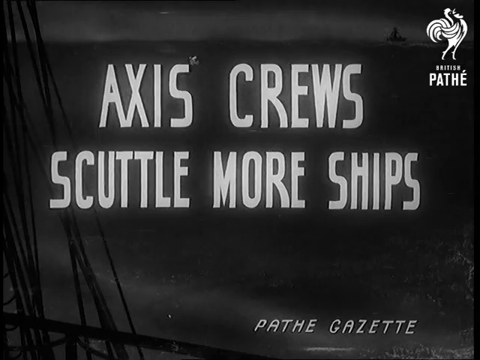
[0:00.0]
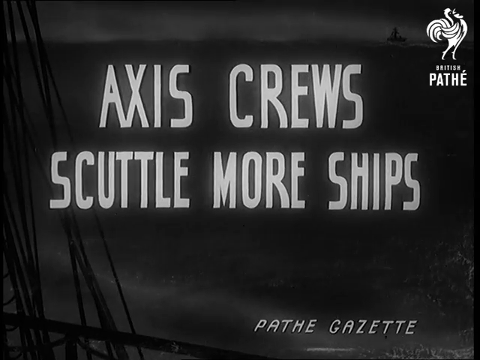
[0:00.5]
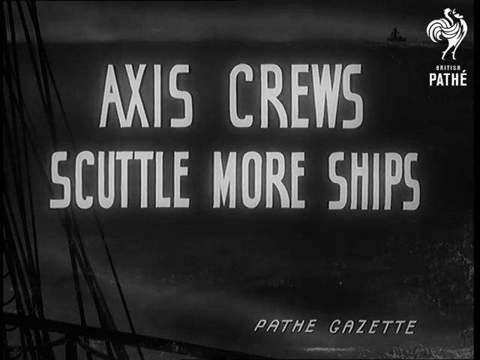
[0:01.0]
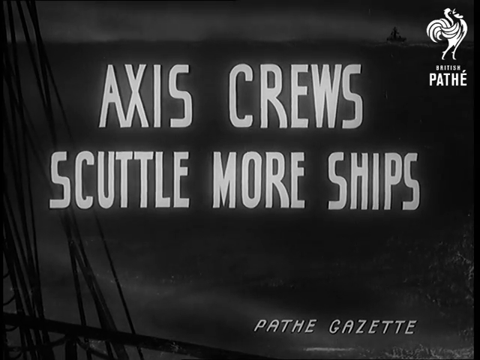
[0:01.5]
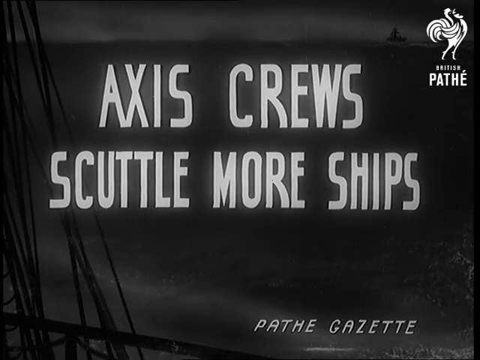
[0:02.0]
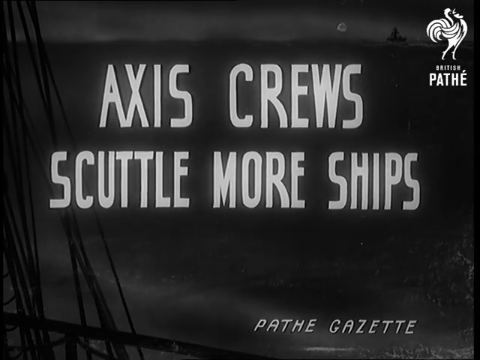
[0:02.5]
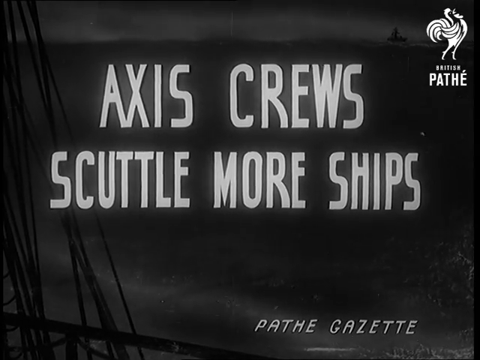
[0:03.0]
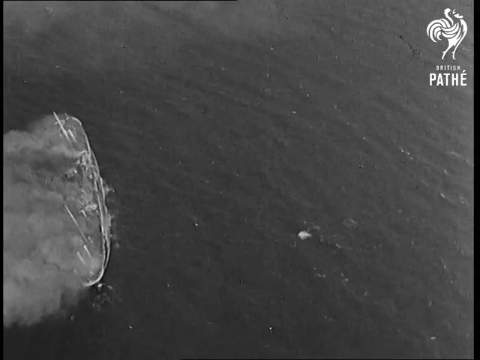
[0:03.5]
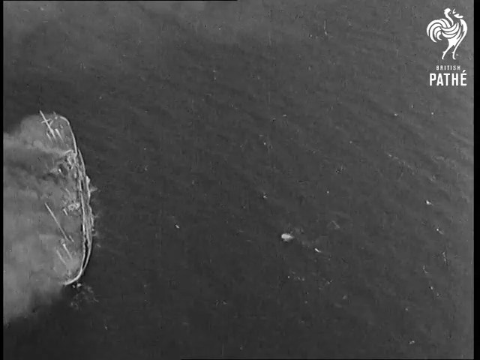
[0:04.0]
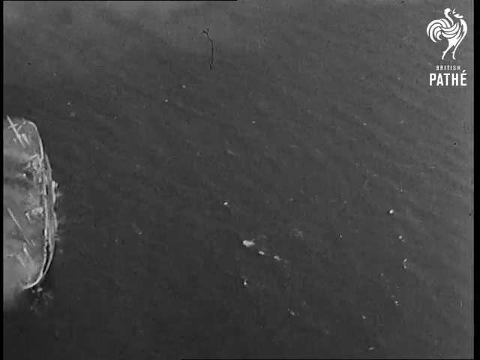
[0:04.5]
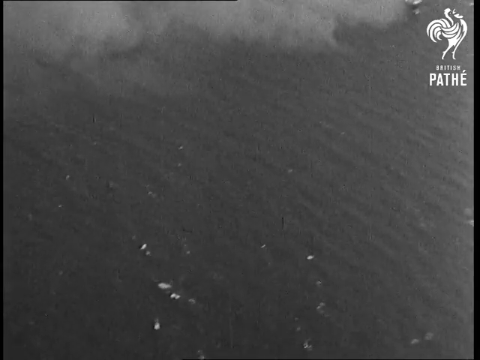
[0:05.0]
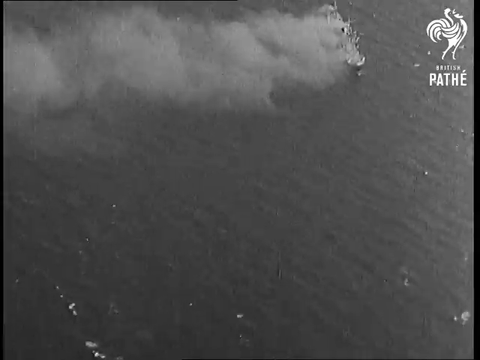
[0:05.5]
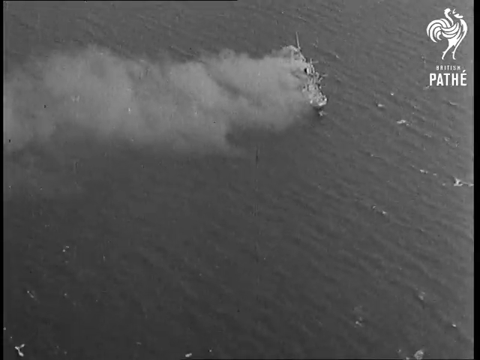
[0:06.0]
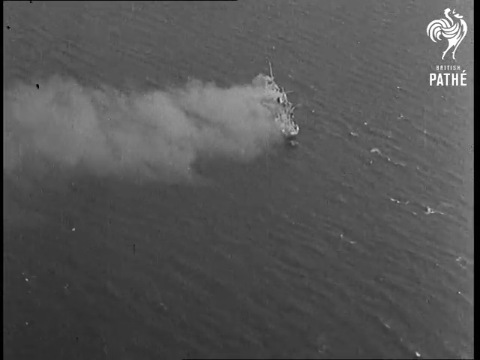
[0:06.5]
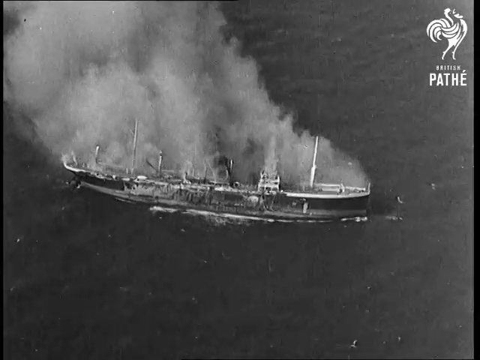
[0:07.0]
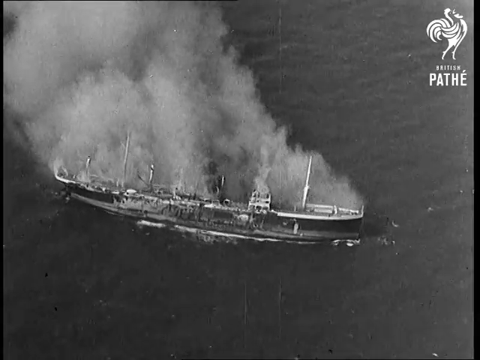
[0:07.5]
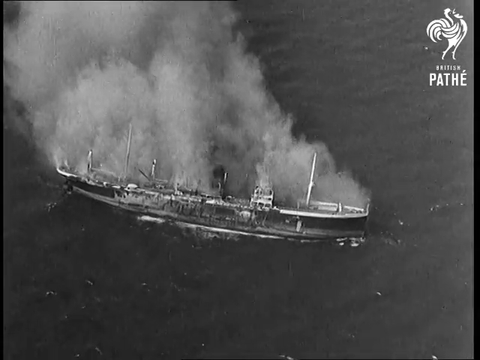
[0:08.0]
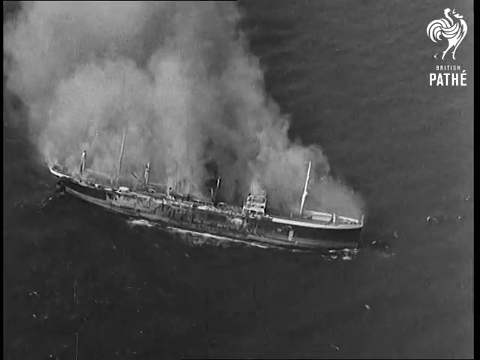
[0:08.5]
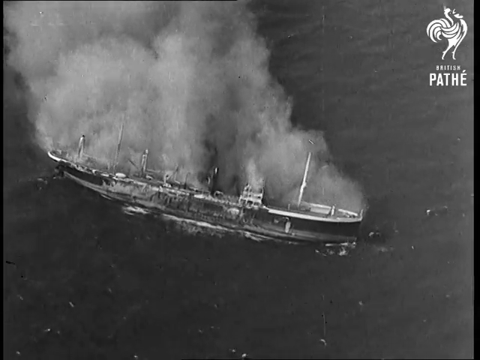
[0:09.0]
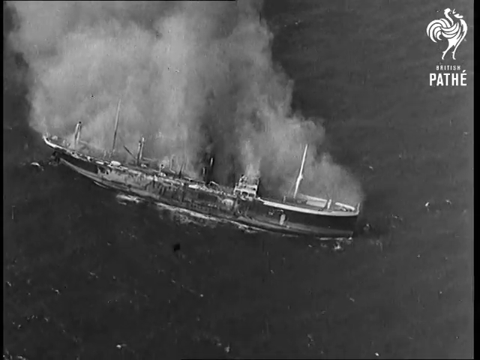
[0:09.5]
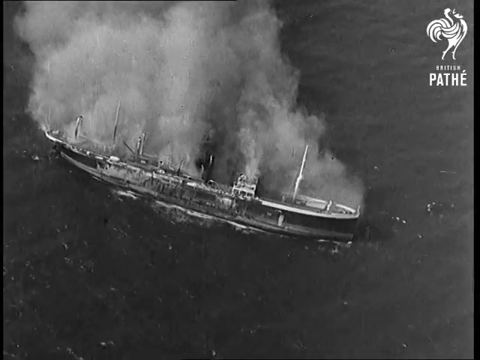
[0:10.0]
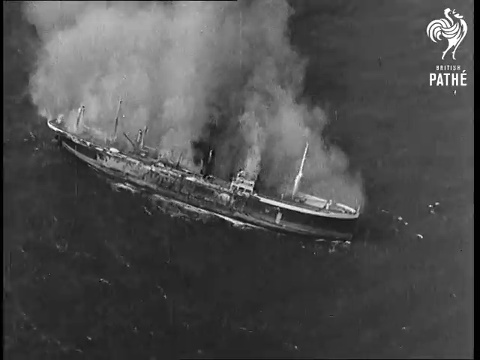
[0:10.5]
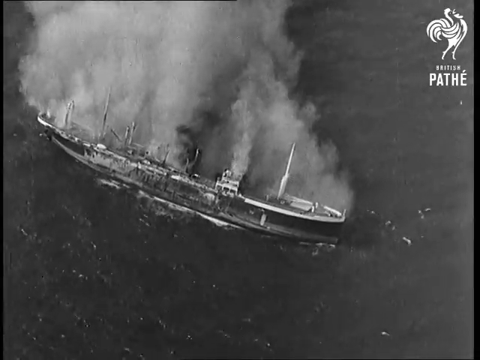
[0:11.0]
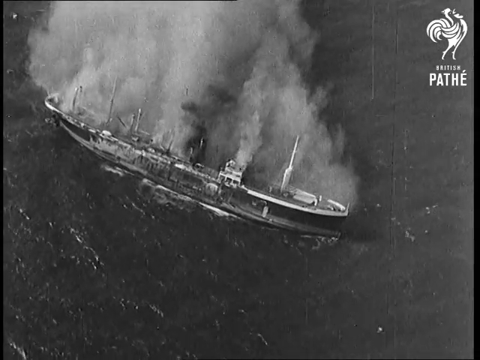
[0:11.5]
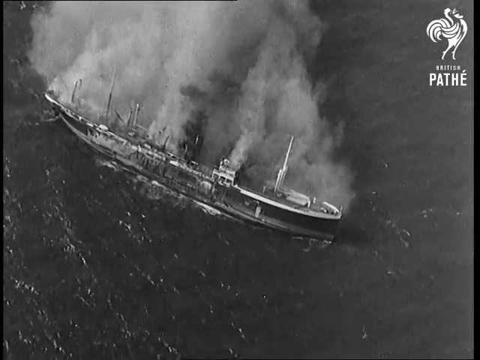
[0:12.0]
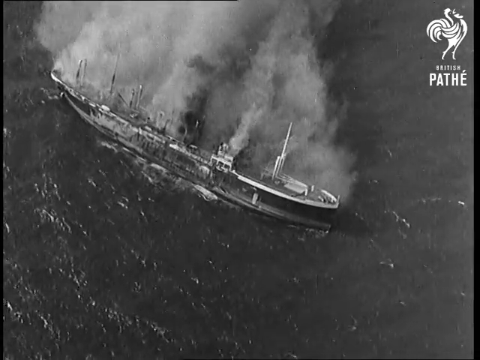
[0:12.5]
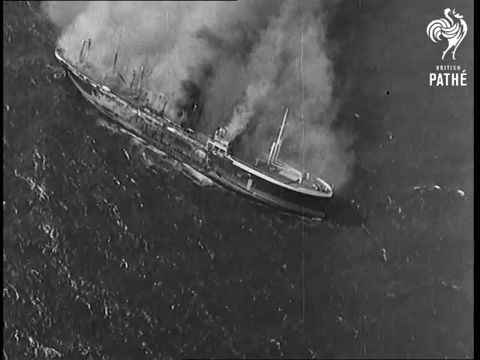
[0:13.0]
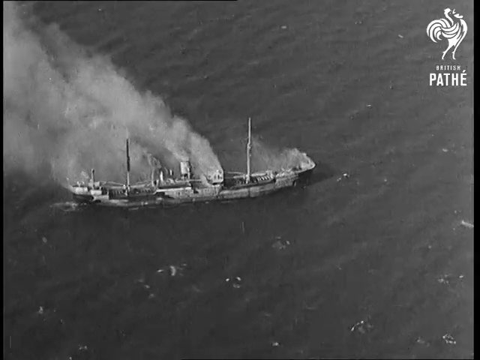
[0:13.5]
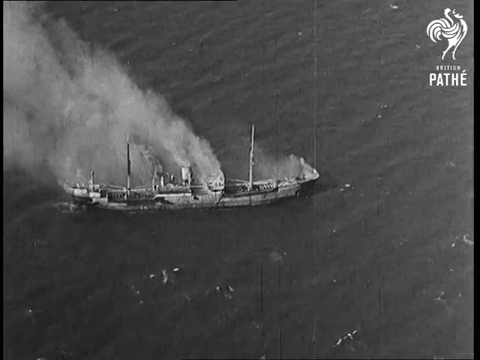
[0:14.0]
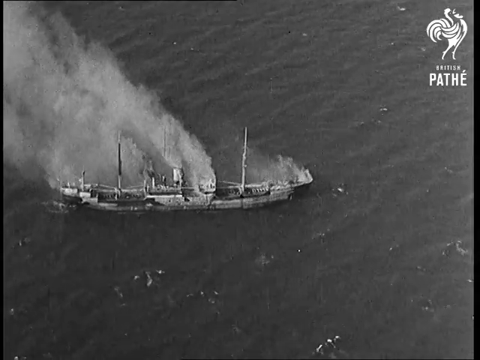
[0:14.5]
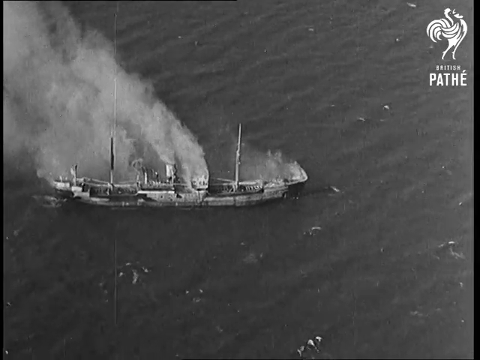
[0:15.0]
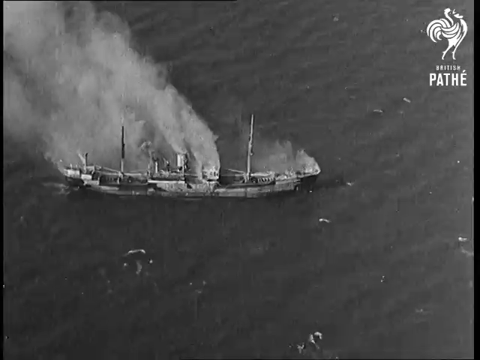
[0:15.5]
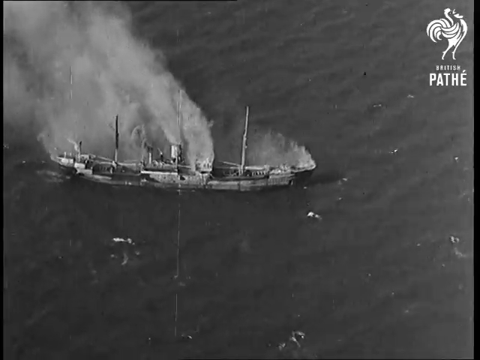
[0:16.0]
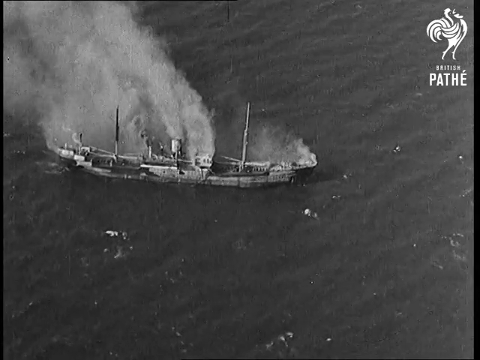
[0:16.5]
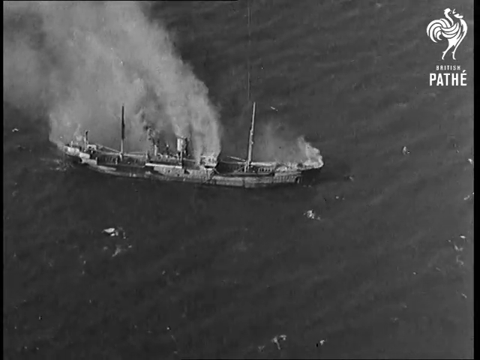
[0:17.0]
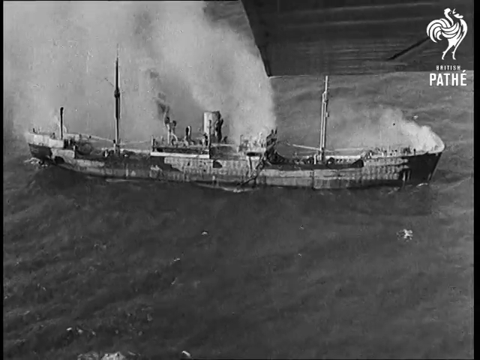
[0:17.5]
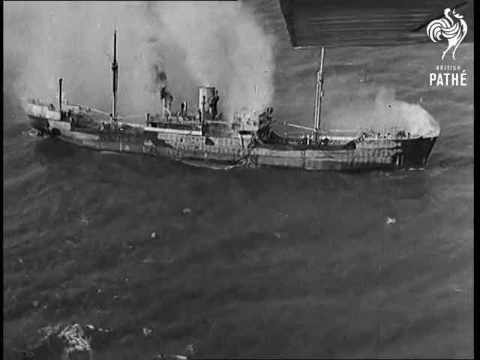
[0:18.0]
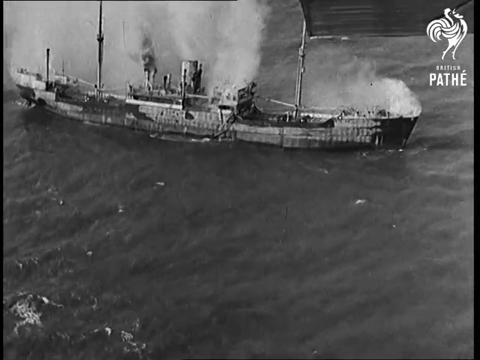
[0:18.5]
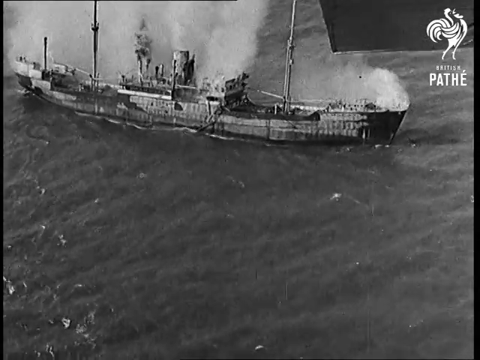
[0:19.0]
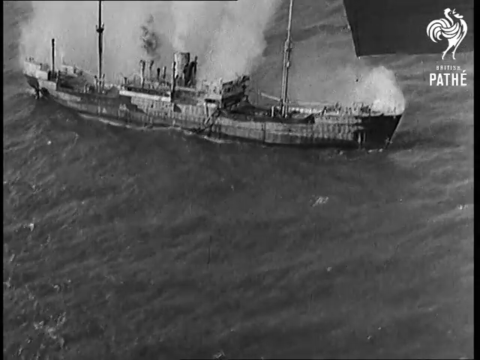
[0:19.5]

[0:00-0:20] The title "Axis crews scuttle more ships" appears. In the top right is the logo of a company called British Pathé, a cockerel baring its chest, and in the bottom right are the words "Pathé Gazette", so this seems to be some kind of news story or bulletin. The footage is black and white and quite grainy, apparently from the Second World War given the mention of the Axis. Aerial footage of the ocean shows a ship with smoke rising from it, then another ship with smoke rising from it, then a closer shot of a third ship with smoke emerging from it, possibly one of the ships already seen. It is clearly a warship. Another close-up shows a ship with smoke rising from it. The ships, apparently attacked, give off large plumes of smoke. One ship is veering and tilting to its side, almost as if about to sink. These are warships with large guns on them, very large ships in the middle of the ocean.